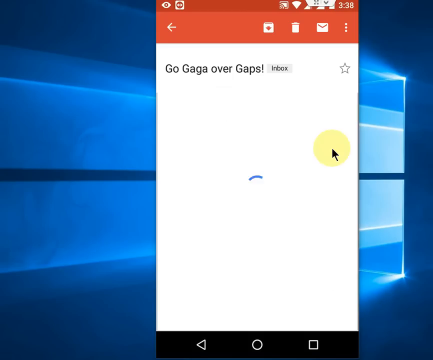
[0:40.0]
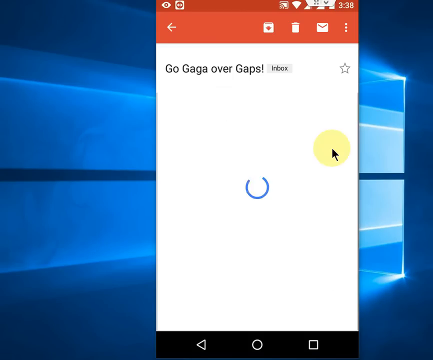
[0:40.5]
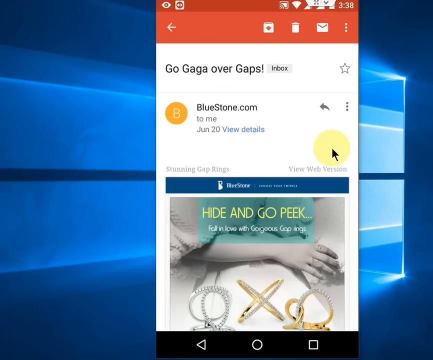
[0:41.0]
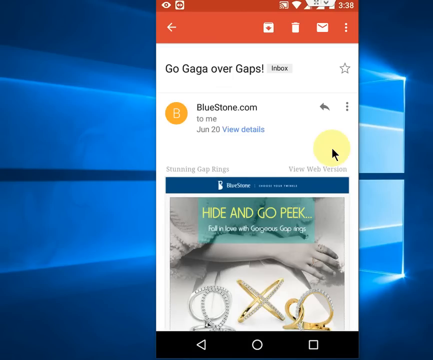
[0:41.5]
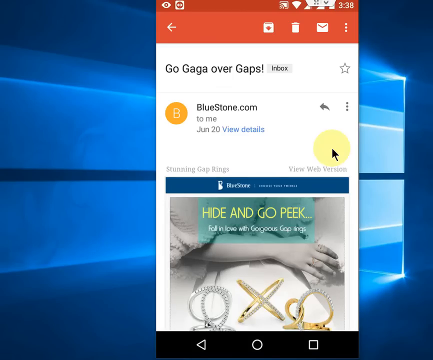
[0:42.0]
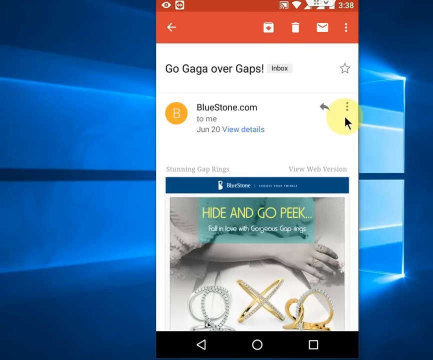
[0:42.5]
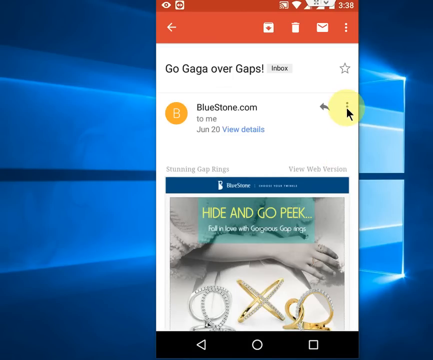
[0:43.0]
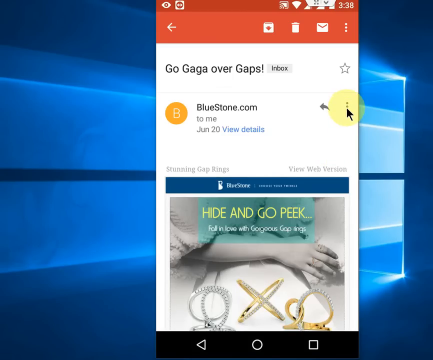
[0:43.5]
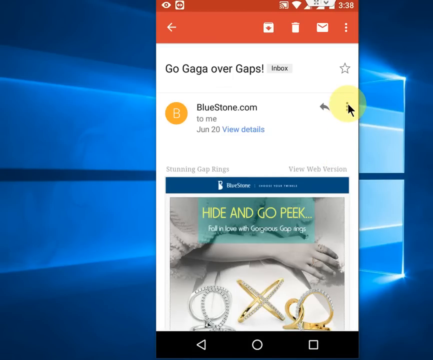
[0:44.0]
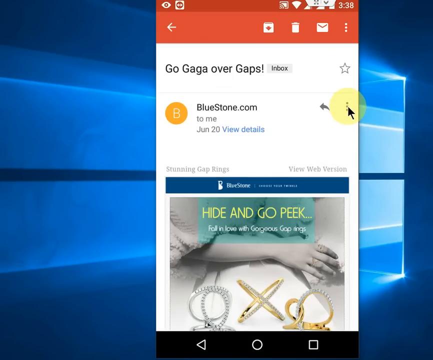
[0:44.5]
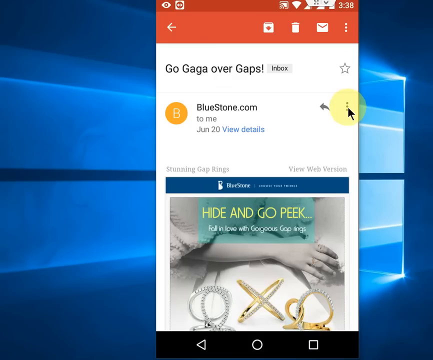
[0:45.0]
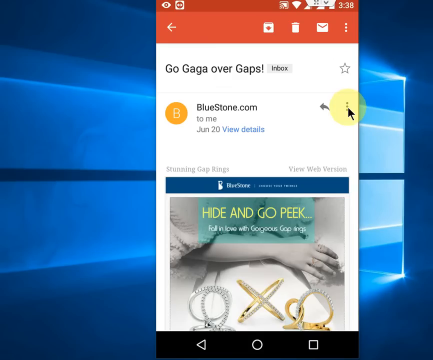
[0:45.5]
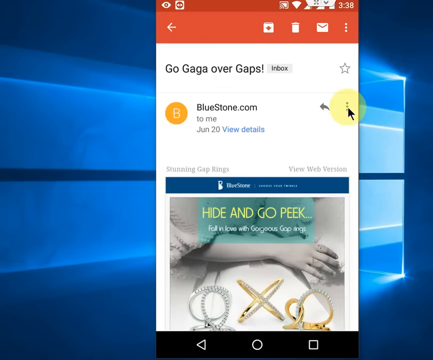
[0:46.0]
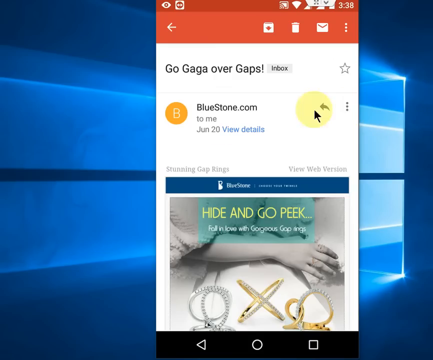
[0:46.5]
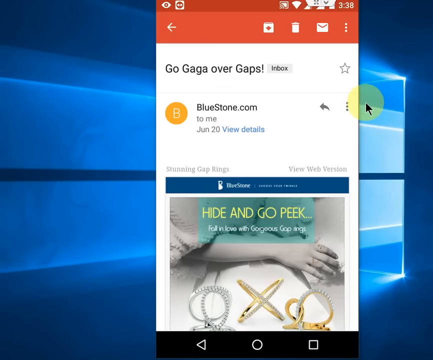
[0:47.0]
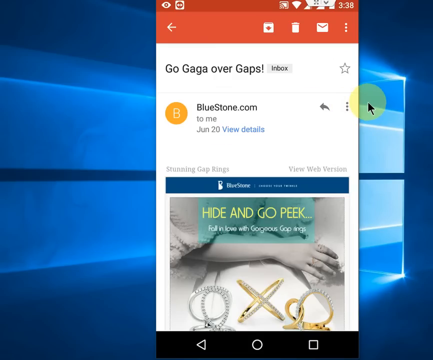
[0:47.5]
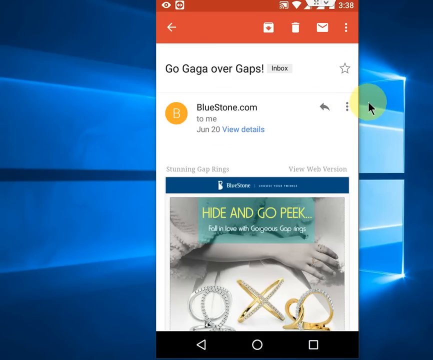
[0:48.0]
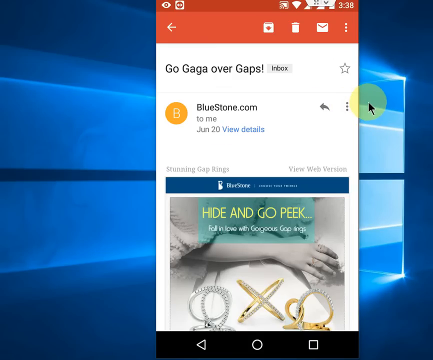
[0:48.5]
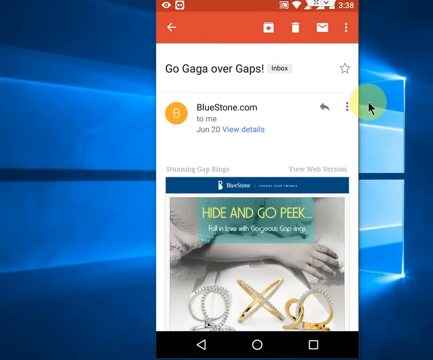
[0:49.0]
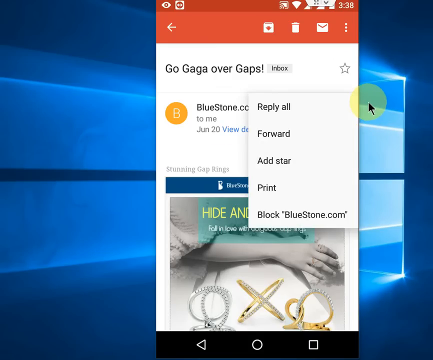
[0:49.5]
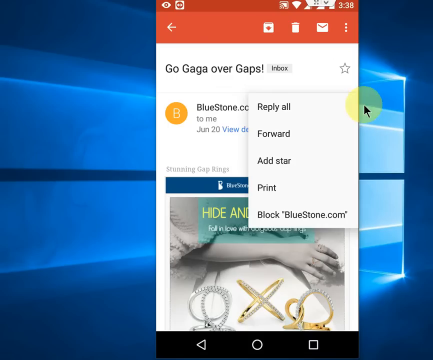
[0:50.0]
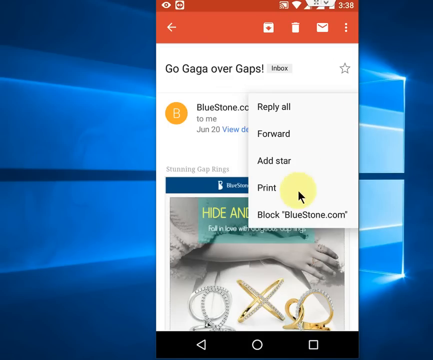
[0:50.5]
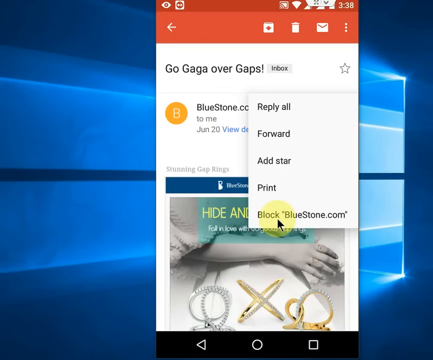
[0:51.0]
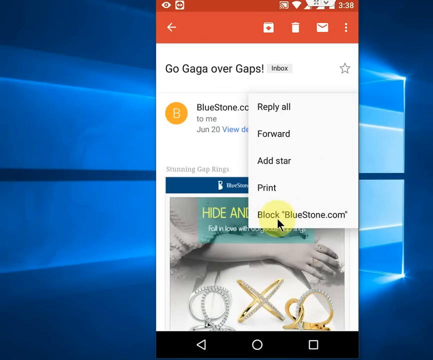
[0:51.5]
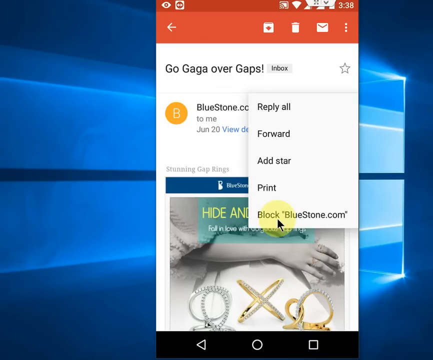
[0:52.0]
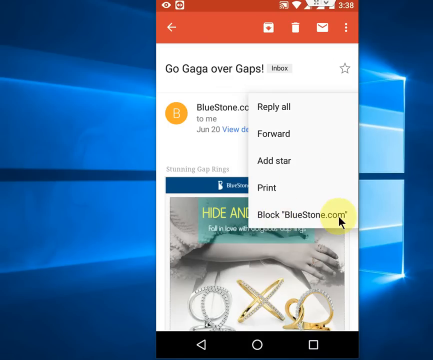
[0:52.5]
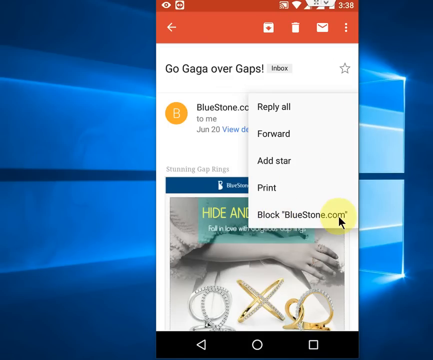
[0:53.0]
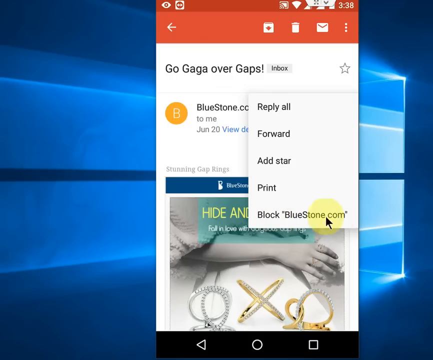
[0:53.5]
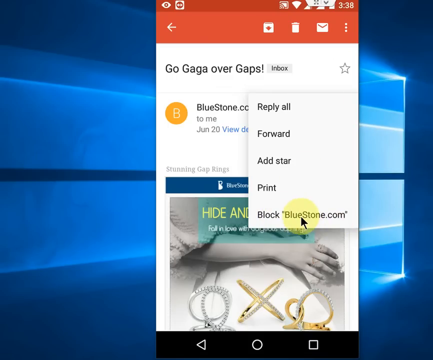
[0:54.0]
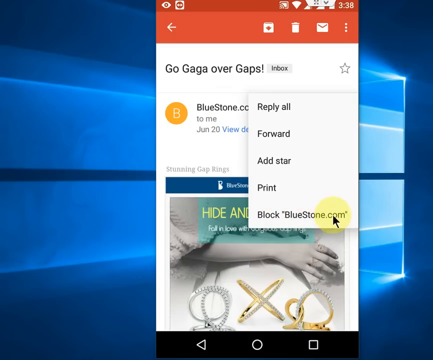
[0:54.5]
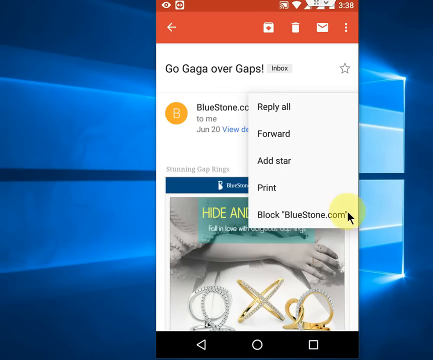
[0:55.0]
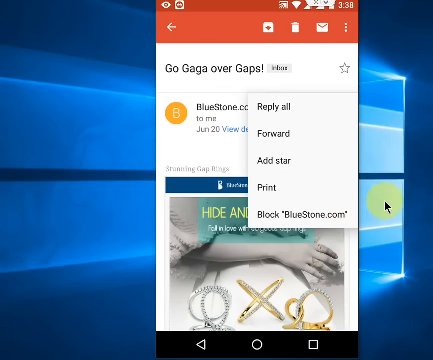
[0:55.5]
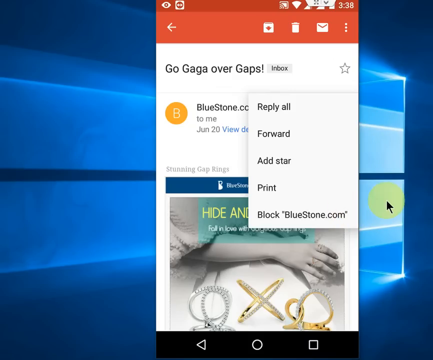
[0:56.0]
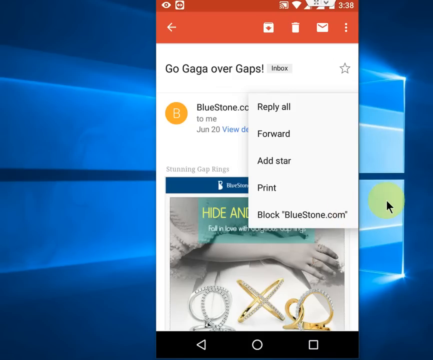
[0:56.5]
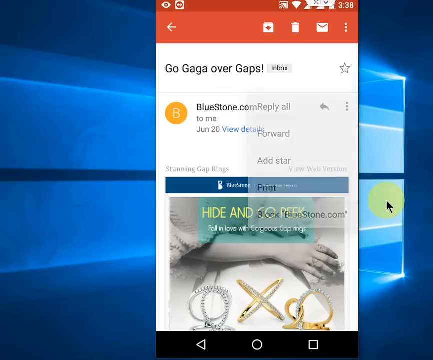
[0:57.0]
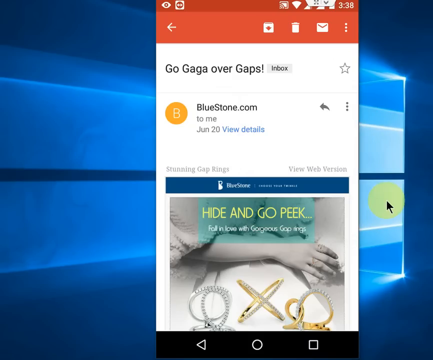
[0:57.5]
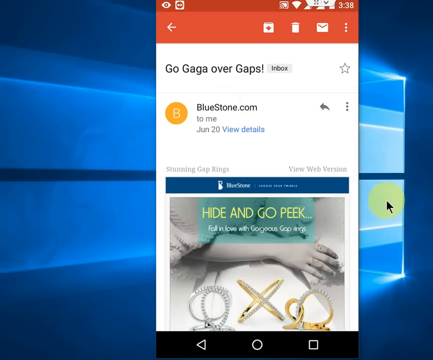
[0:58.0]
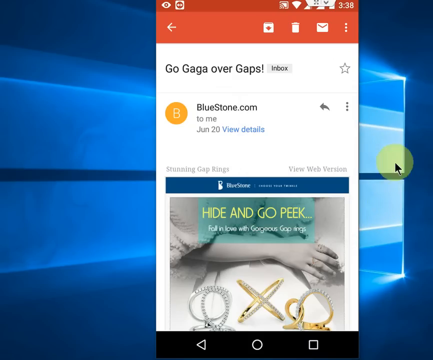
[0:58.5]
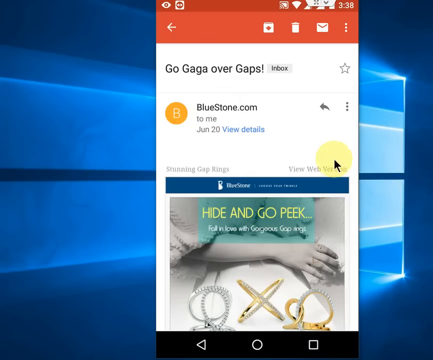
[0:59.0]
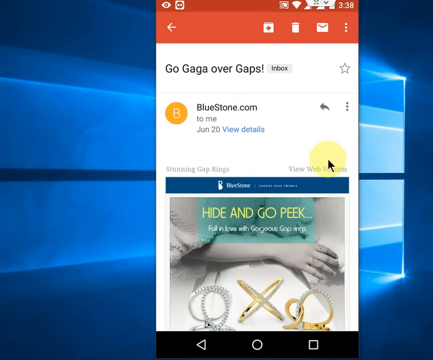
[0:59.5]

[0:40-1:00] A new phone screen is pulled up over the same blue light background. It reads "Go Gaga over gaps" and "inbox" in black text. The yellow circle cursor is on the screen. Next, "bluestone.com" appears in black beside an orange circle with a white B inside. On the bottom half of the page, "Hide and Go Peek" is written in yellow inside a green rectangle, and at the bottom of that rectangle, white text reads "Fall in love with gorgeous gap rings". Underneath is a woman's arm, with what looks like a silver necklace, a silver and gold bracelet, and another silver and gold bracelet shown as examples at the bottom. The user moves the yellow cursor and clicks the three-dots button, bringing up the options "reply all", "forward", "add star", "print" and "block bluestone.com" in black.